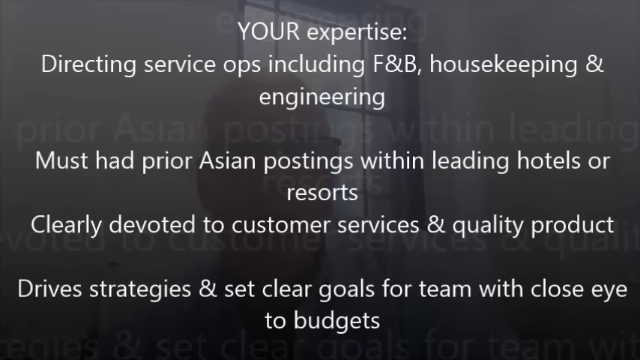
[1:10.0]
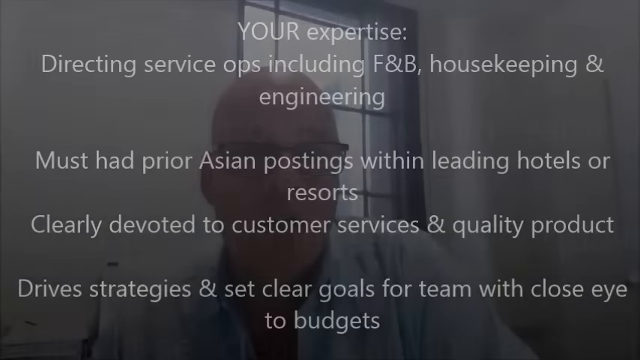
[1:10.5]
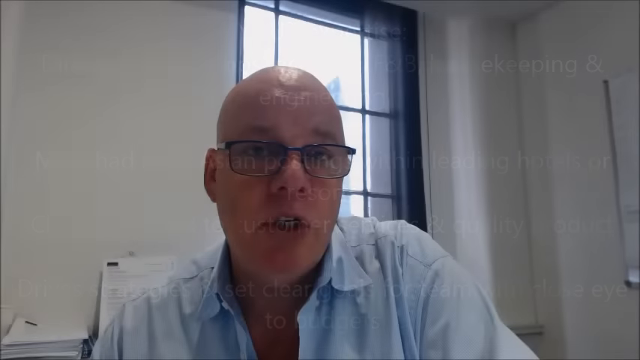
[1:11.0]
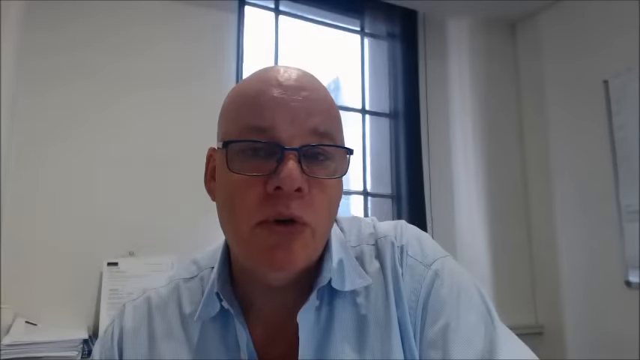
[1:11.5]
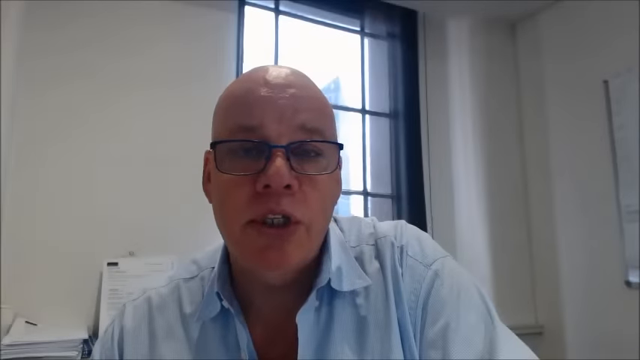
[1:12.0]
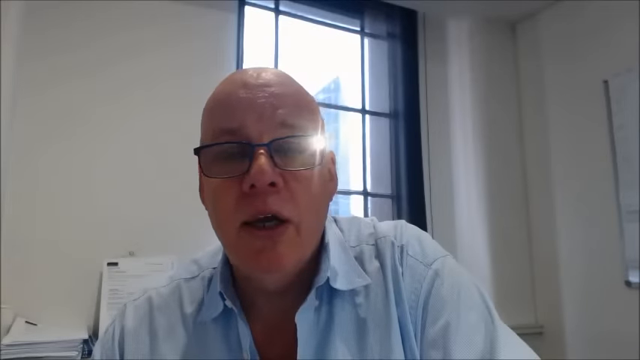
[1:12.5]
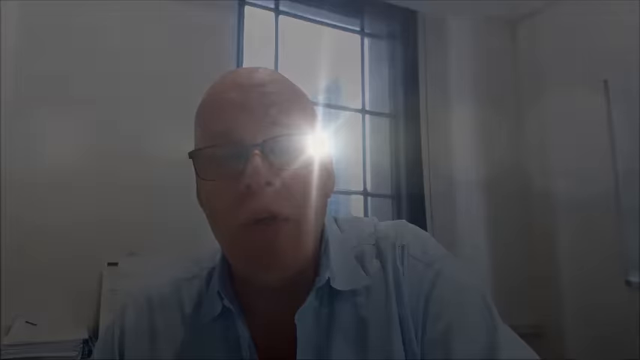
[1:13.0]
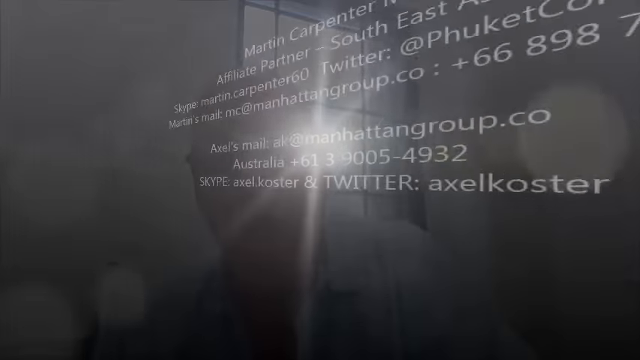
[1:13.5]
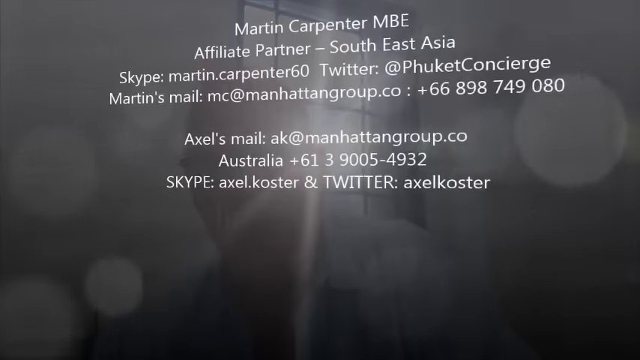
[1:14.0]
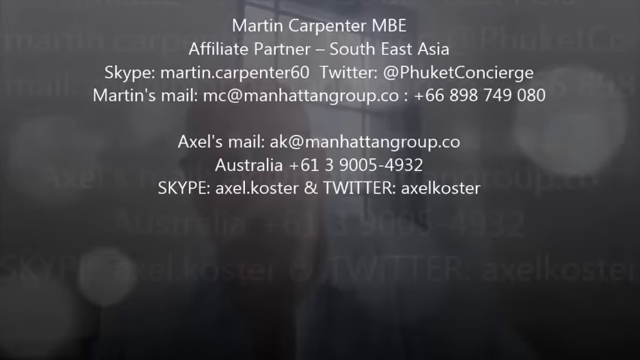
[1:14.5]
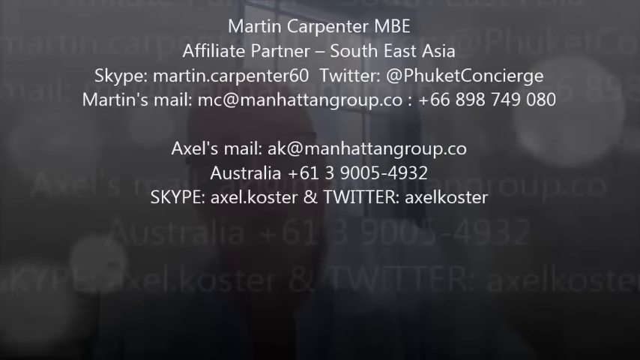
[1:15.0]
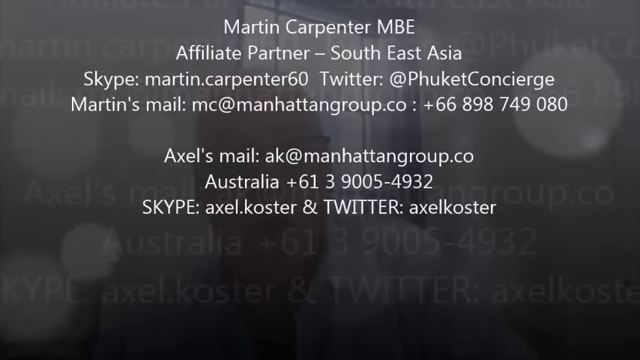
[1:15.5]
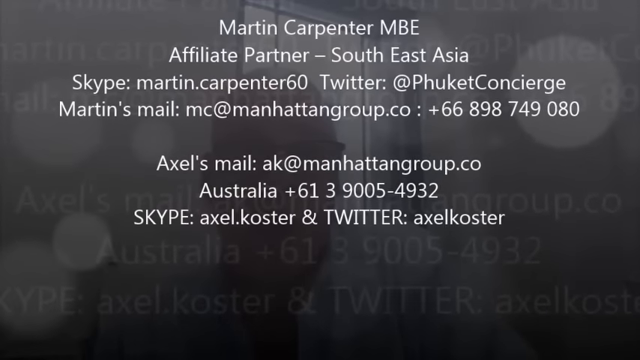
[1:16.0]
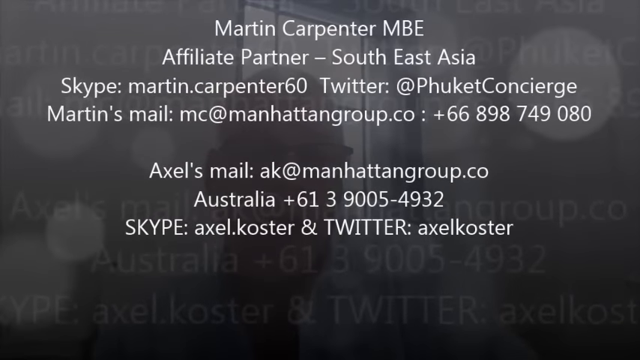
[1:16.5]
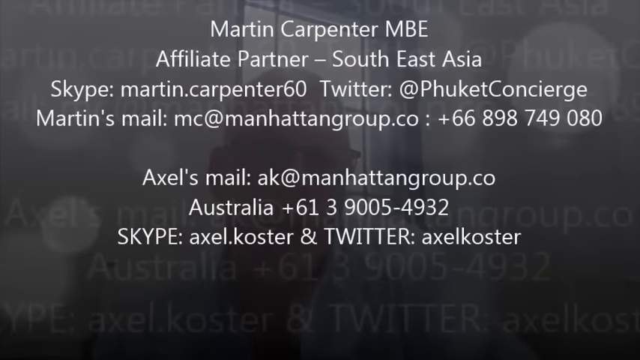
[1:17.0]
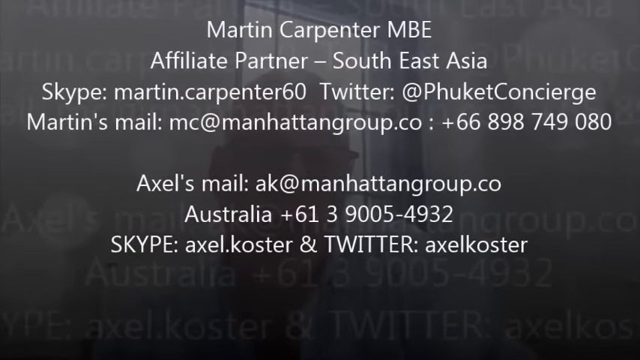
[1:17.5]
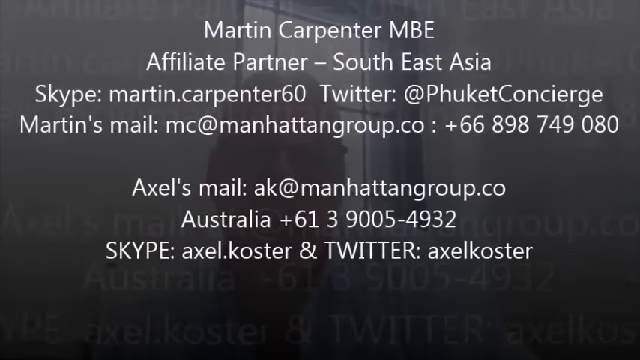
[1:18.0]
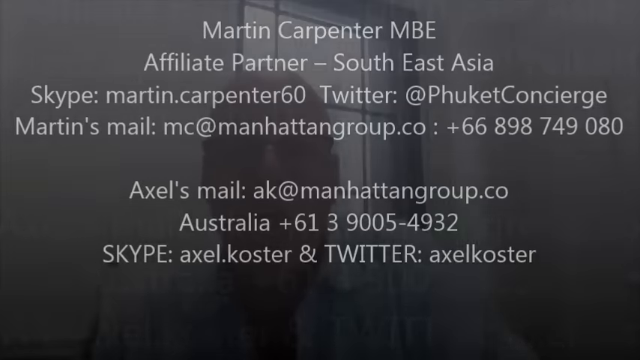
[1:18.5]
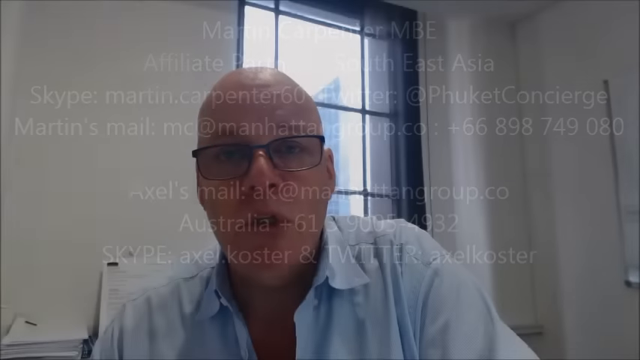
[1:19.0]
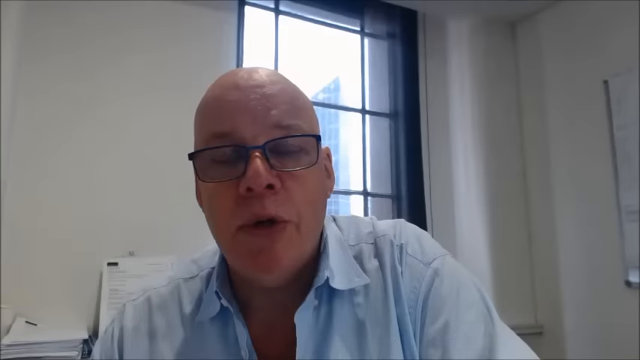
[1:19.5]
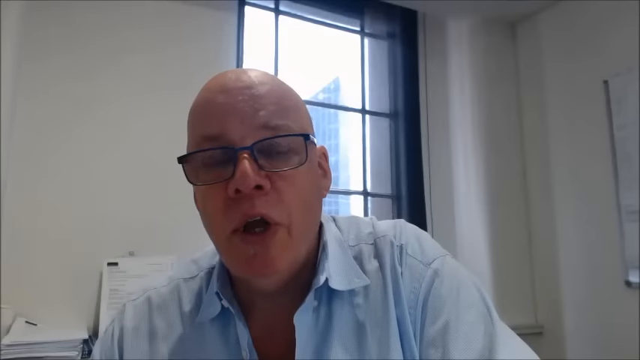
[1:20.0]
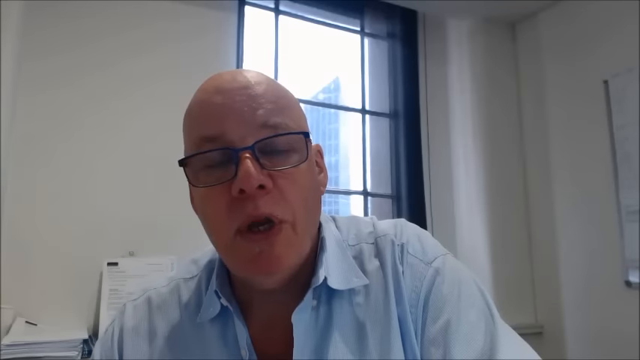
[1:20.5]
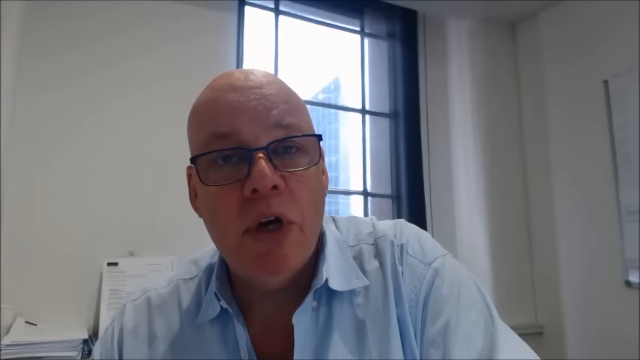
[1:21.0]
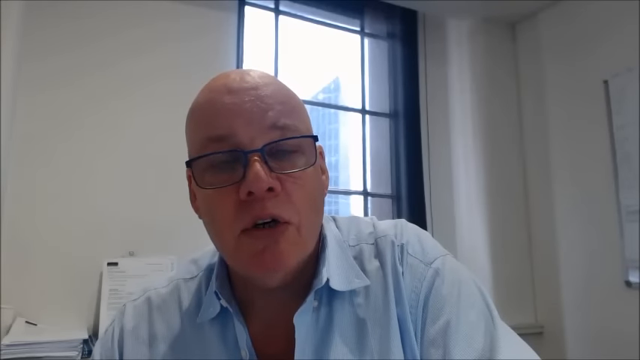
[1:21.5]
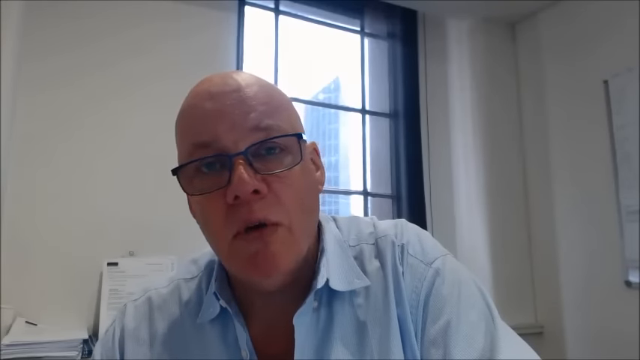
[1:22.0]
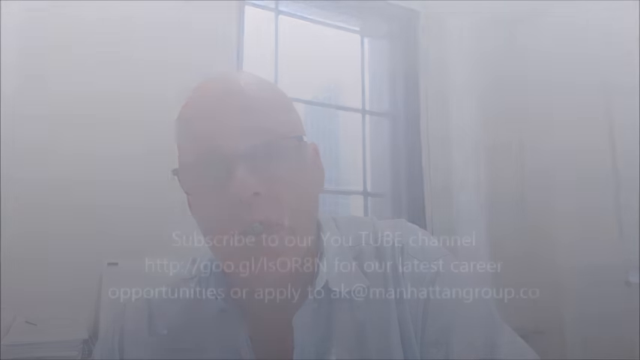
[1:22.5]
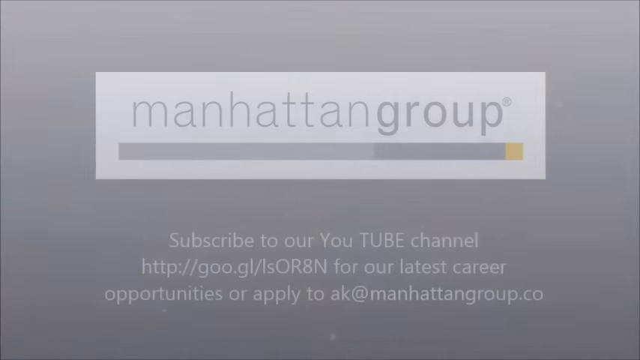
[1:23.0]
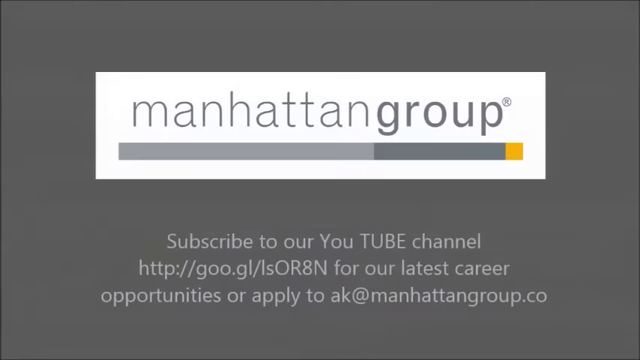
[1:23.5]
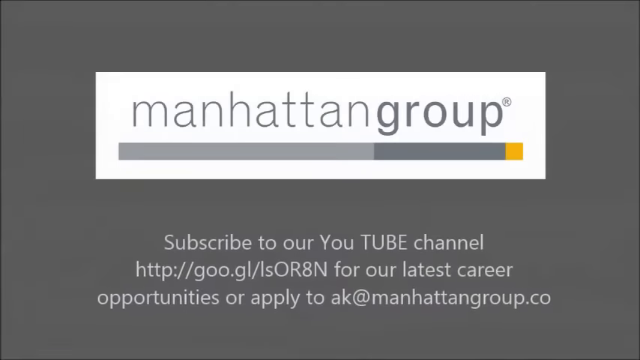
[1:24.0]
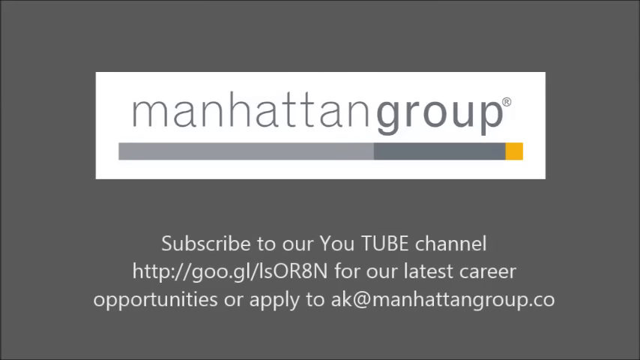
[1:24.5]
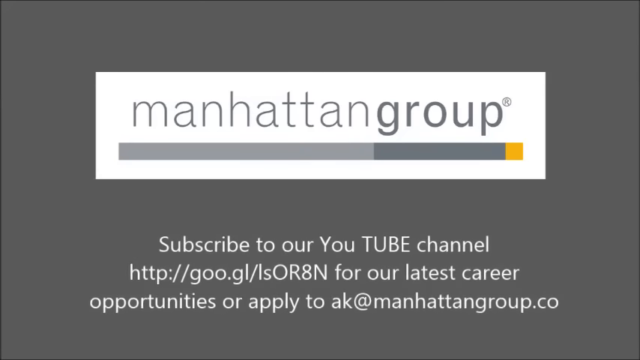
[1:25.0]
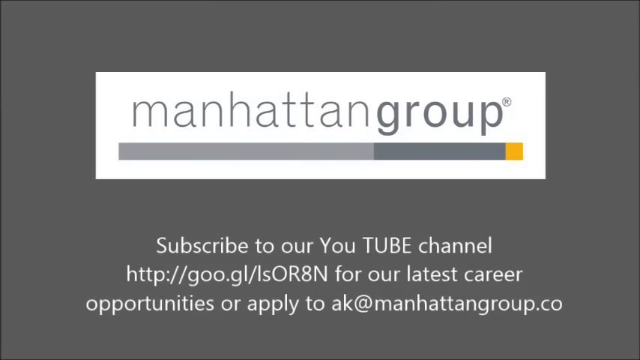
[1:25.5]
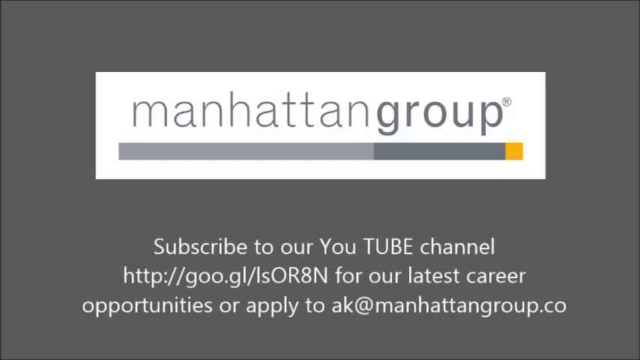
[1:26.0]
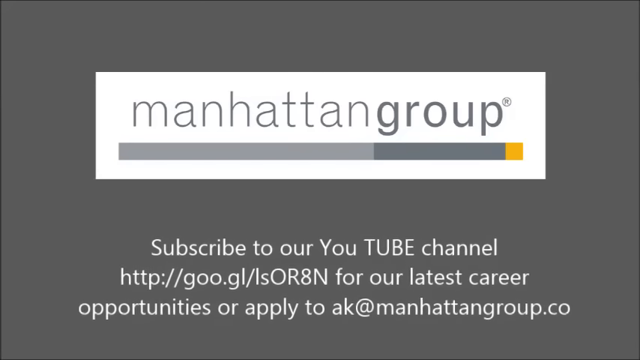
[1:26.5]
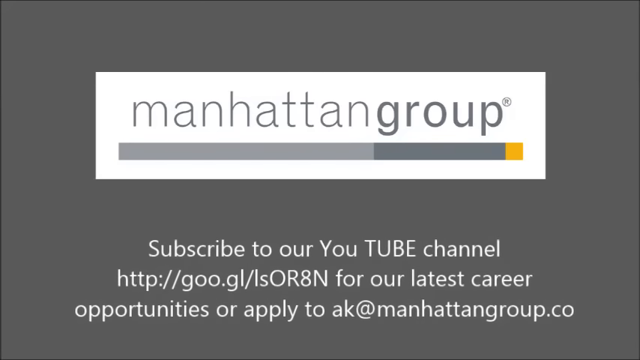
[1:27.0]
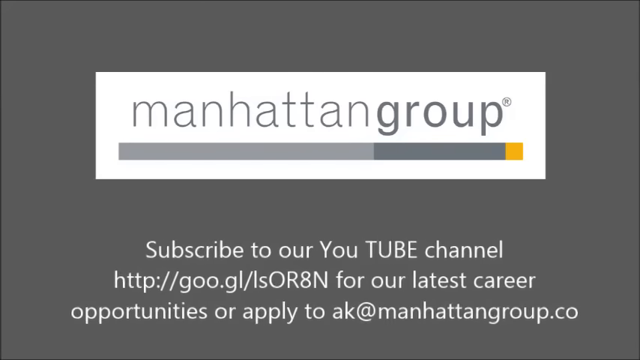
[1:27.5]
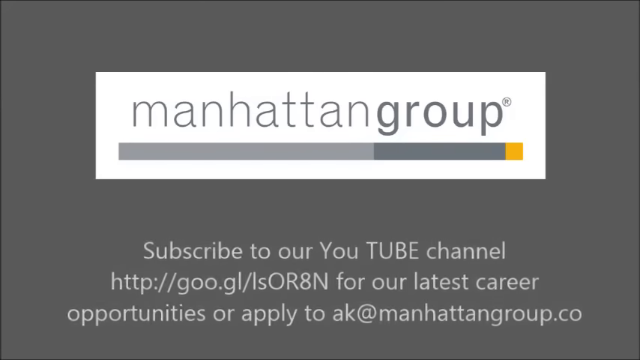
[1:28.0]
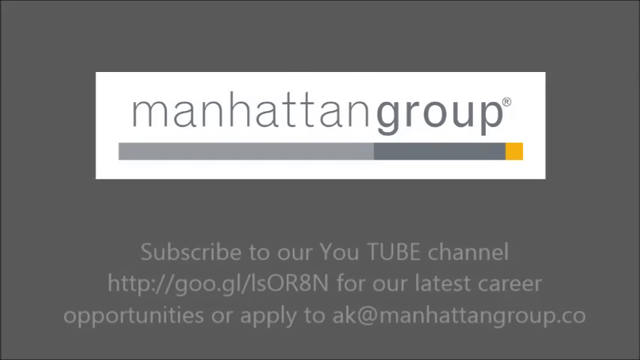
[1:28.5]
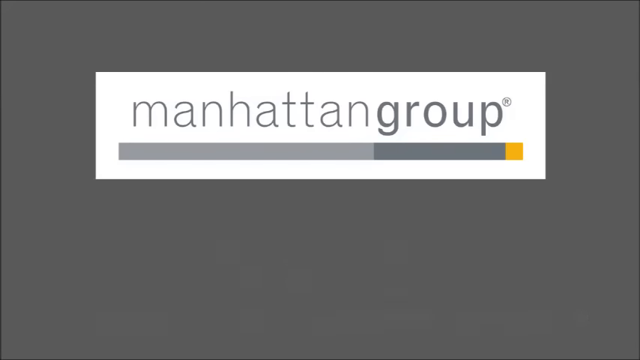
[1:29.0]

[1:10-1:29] Text under "your expertise" reads "directing service ops, including F&B, housekeeping, and engineering," "must had prior Asian postings within leading hotels or resorts," "clearly devoted to customer services and quality product," and finally "drive strategies and set clear goals for team with close eye to budgets." The gentleman is still talking in a white room with a window behind him, the sun kind of shining through. Text then reads "Martin Carpenter, MBE, affiliate partner" for Southeast Asia, with contact details: Skype, Twitter, Martin's mail, a phone number, Axel's mail, and Axel's phone number. The video returns to the man talking, and text for the Manhattan Group reads "subscribe to our YouTube channel for our latest career opportunities."